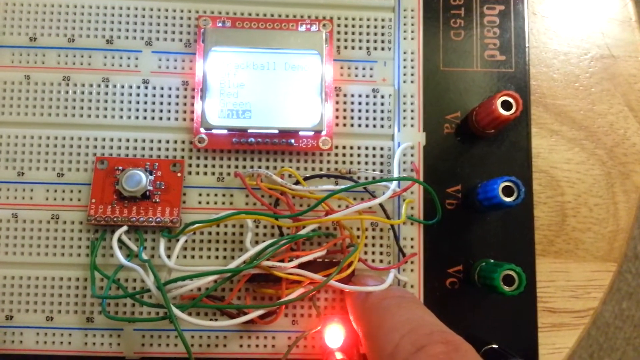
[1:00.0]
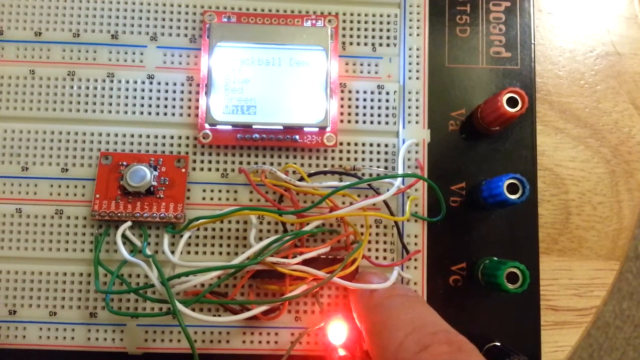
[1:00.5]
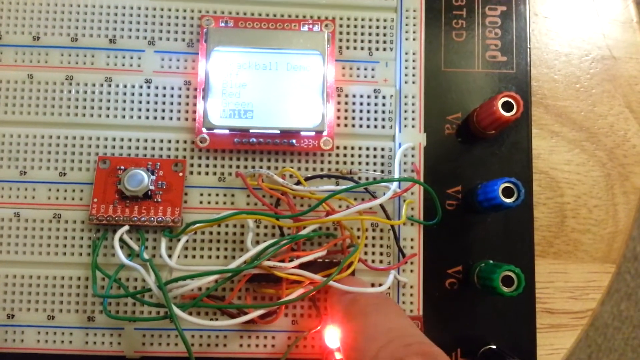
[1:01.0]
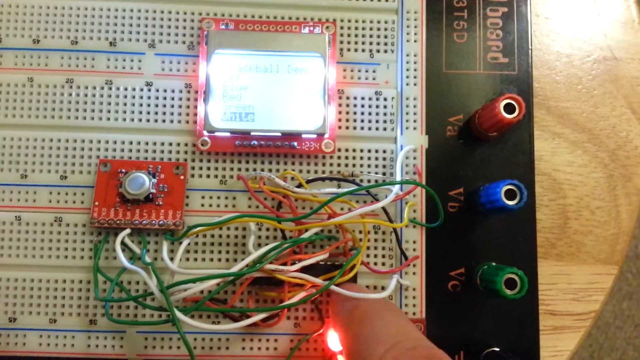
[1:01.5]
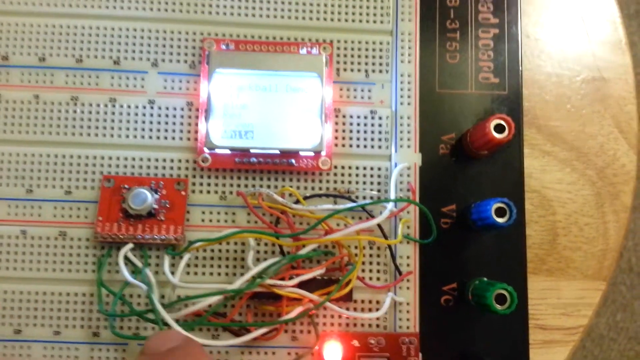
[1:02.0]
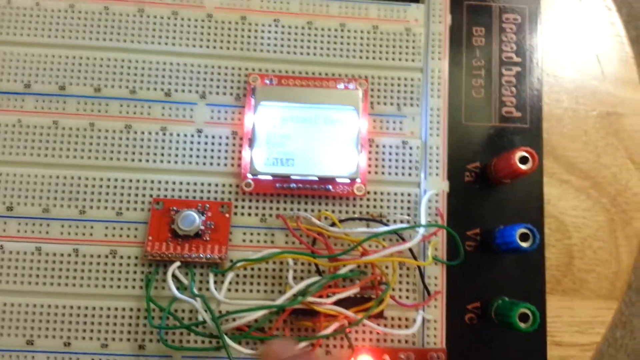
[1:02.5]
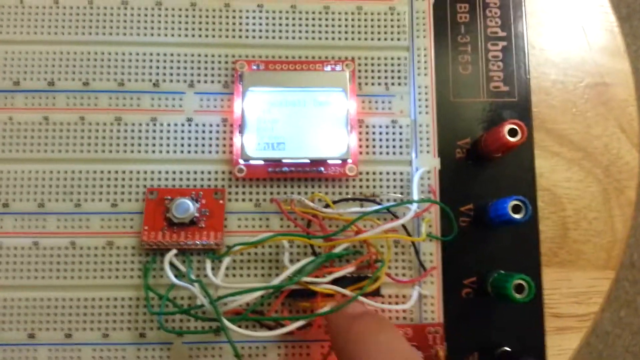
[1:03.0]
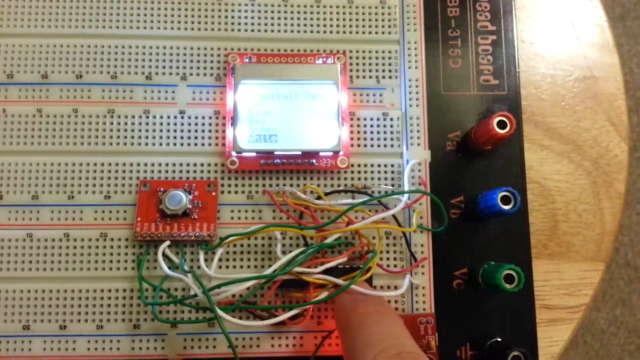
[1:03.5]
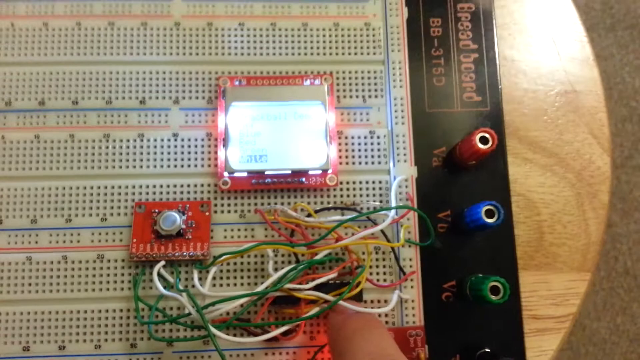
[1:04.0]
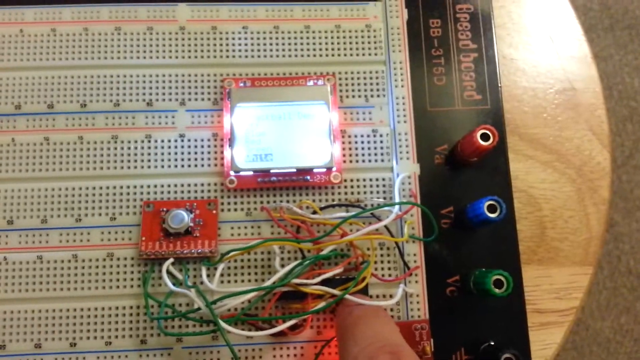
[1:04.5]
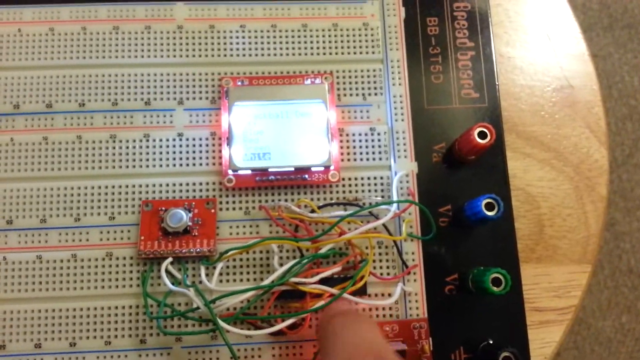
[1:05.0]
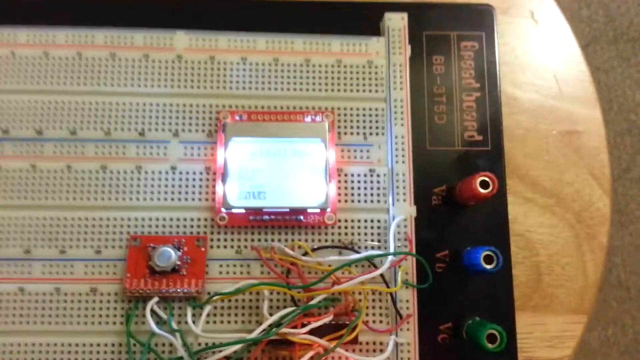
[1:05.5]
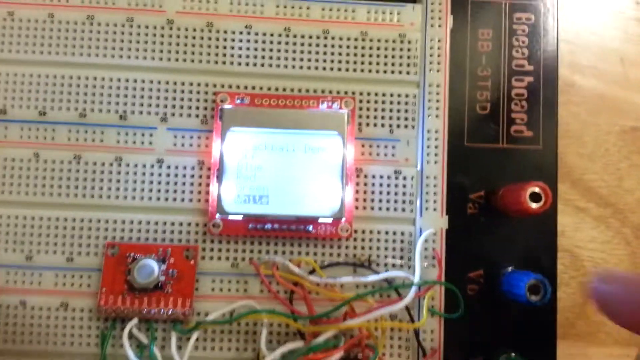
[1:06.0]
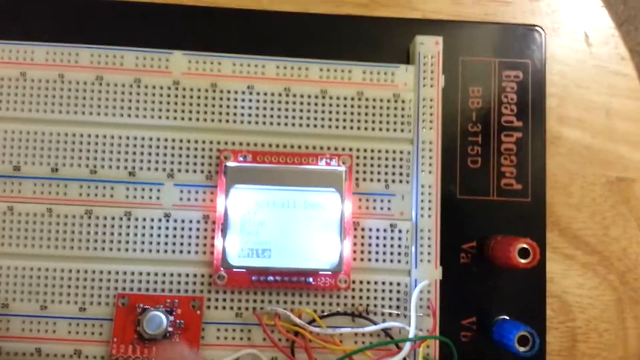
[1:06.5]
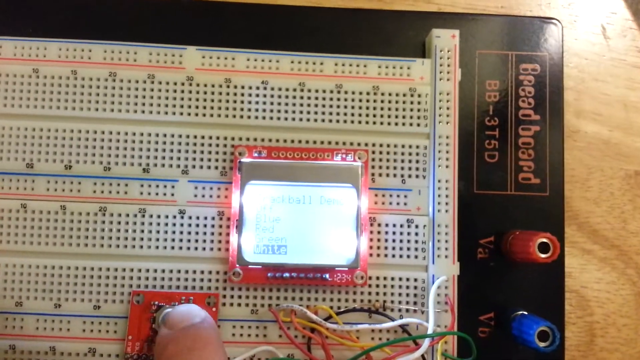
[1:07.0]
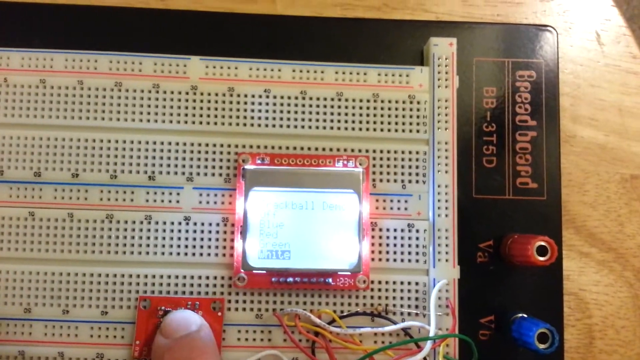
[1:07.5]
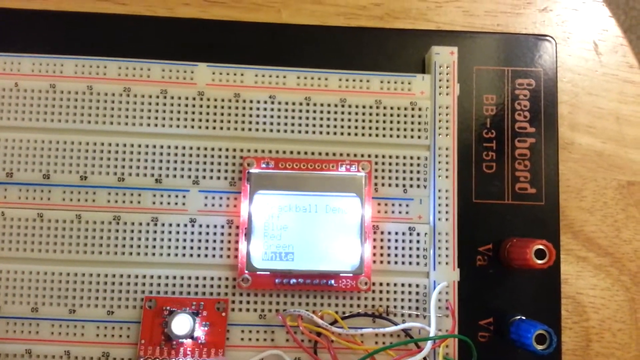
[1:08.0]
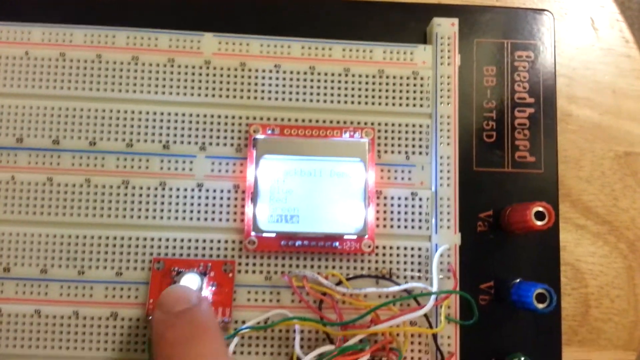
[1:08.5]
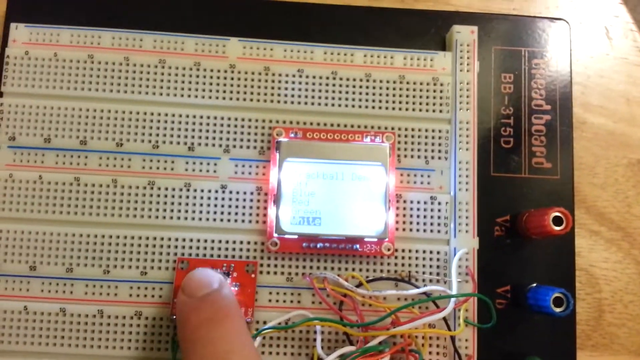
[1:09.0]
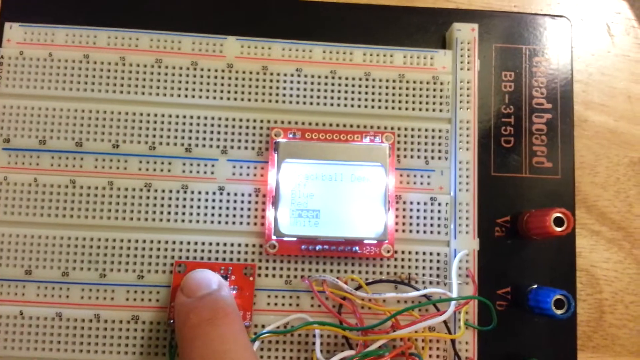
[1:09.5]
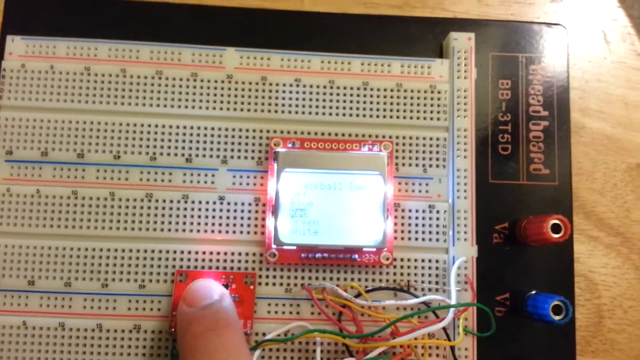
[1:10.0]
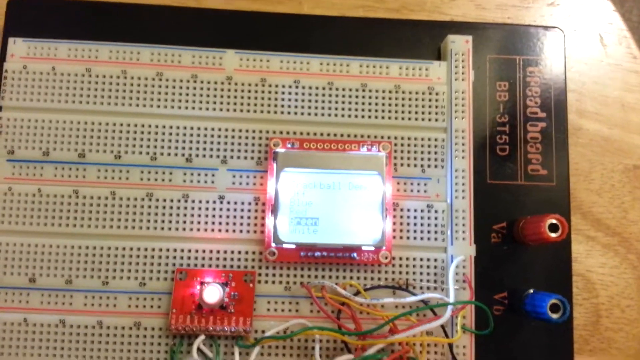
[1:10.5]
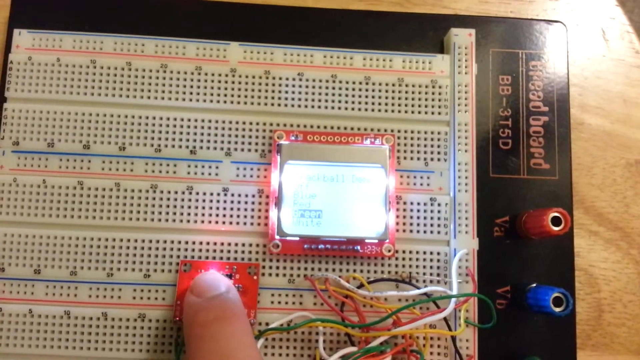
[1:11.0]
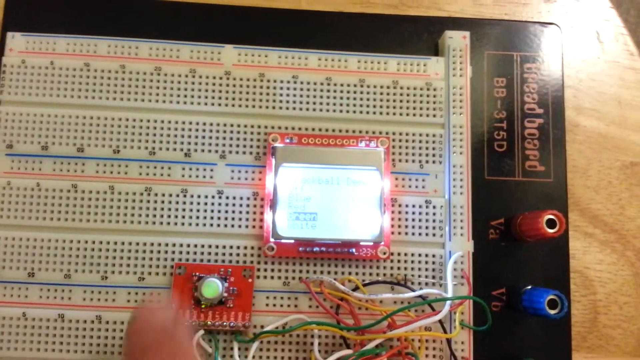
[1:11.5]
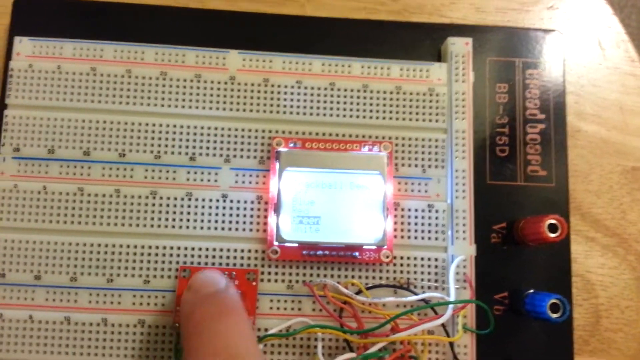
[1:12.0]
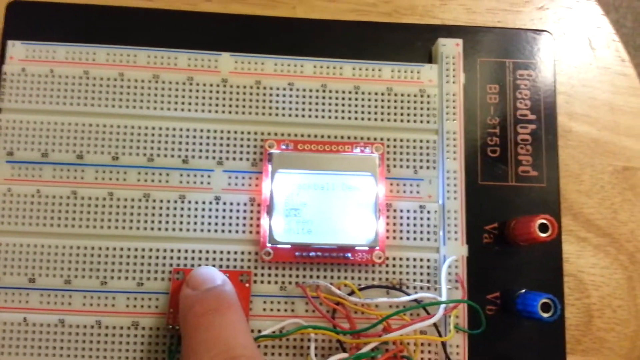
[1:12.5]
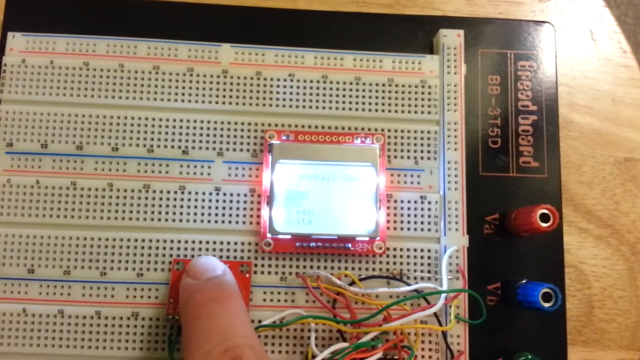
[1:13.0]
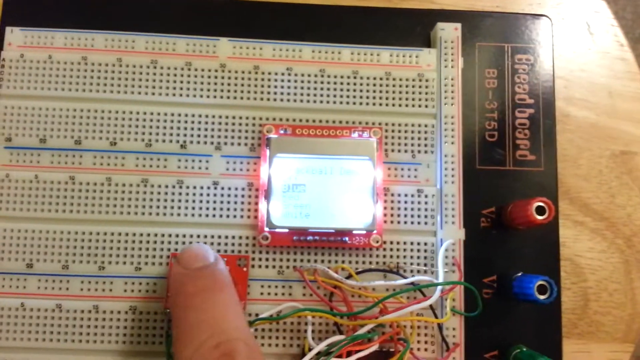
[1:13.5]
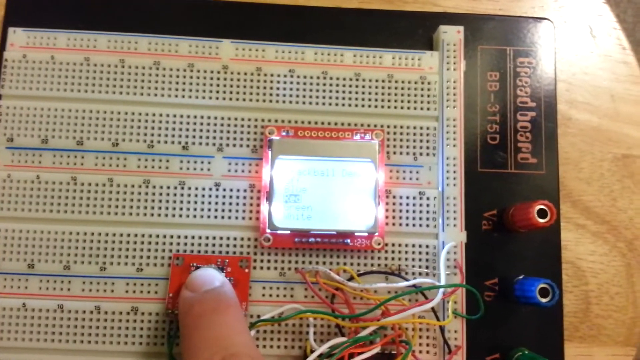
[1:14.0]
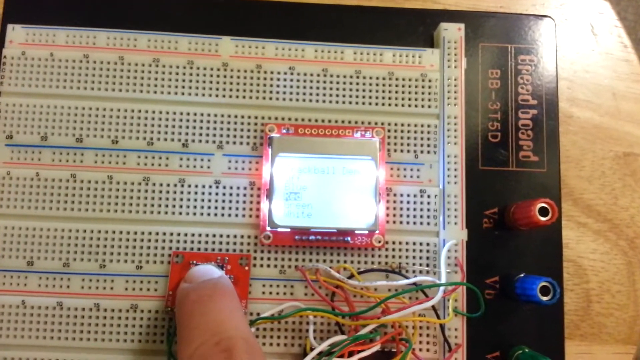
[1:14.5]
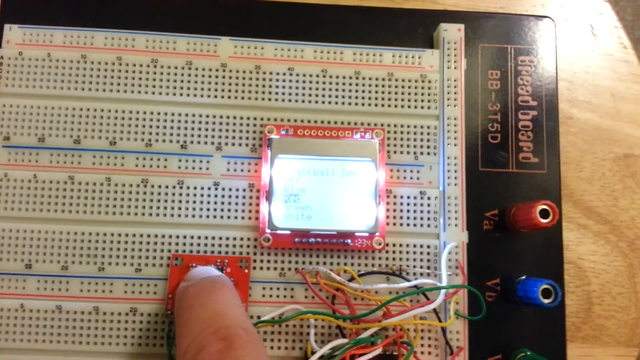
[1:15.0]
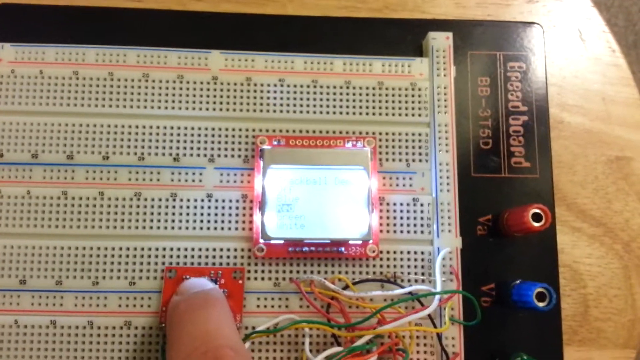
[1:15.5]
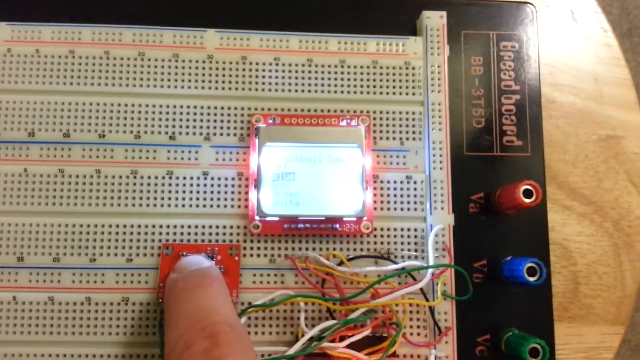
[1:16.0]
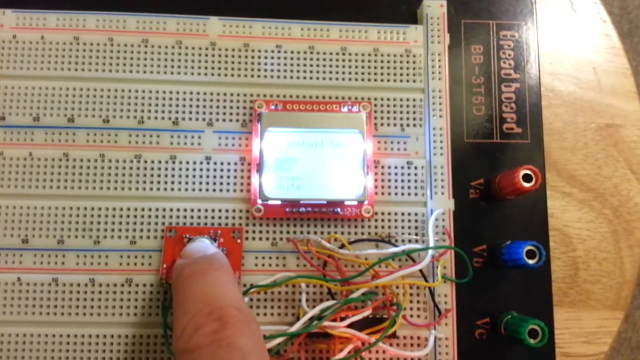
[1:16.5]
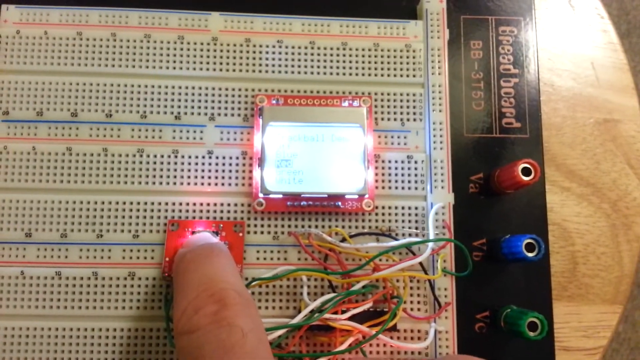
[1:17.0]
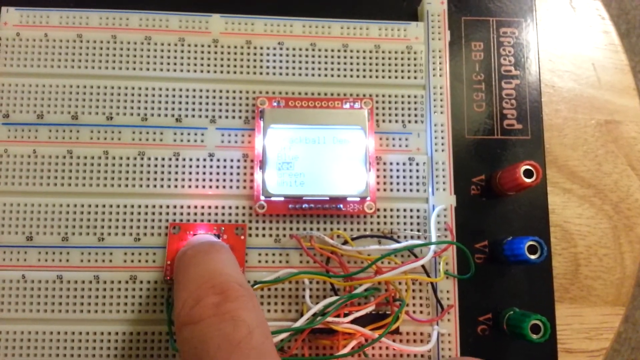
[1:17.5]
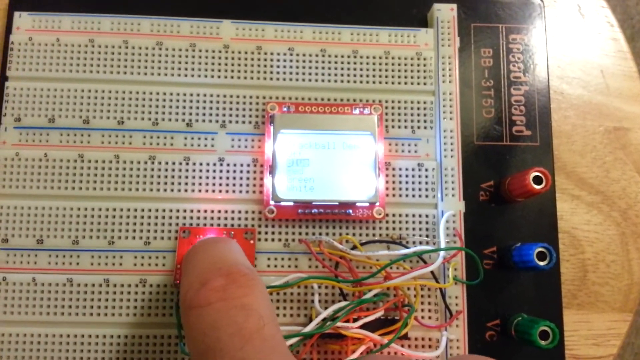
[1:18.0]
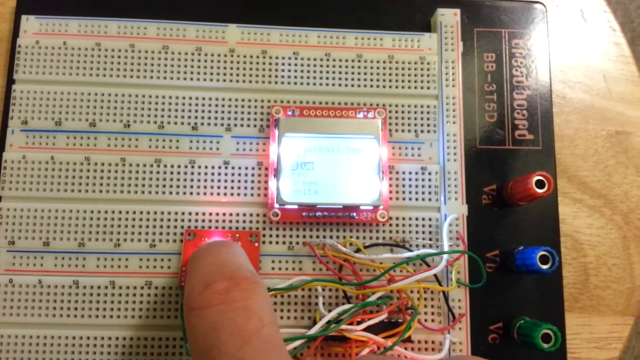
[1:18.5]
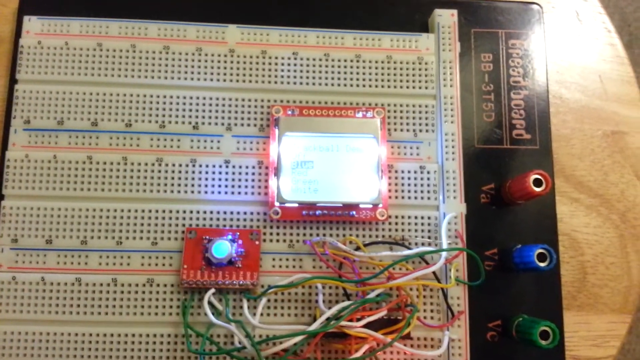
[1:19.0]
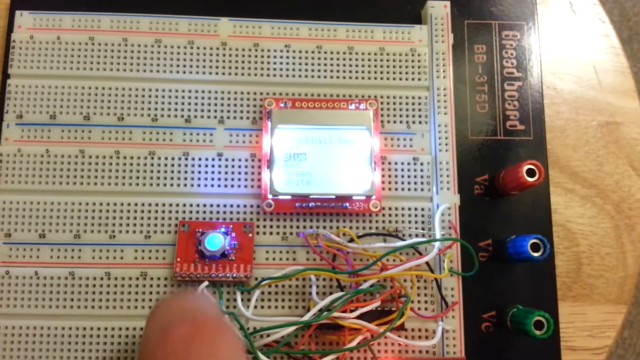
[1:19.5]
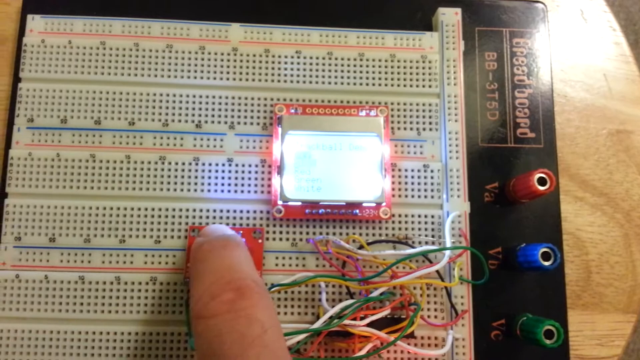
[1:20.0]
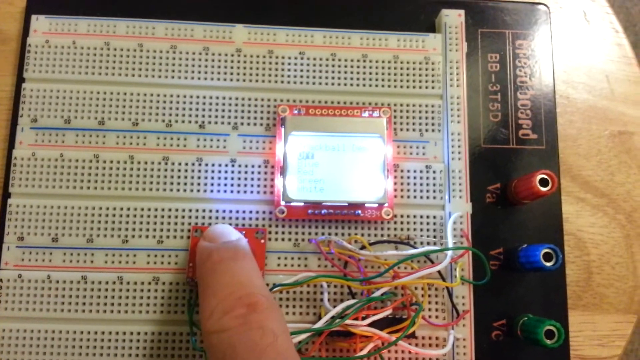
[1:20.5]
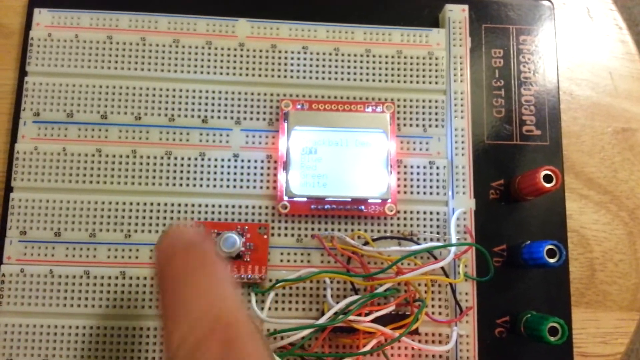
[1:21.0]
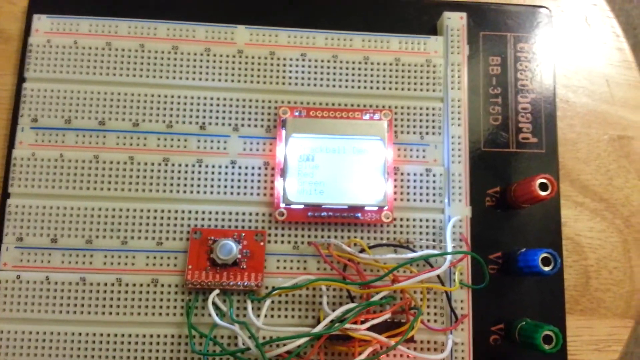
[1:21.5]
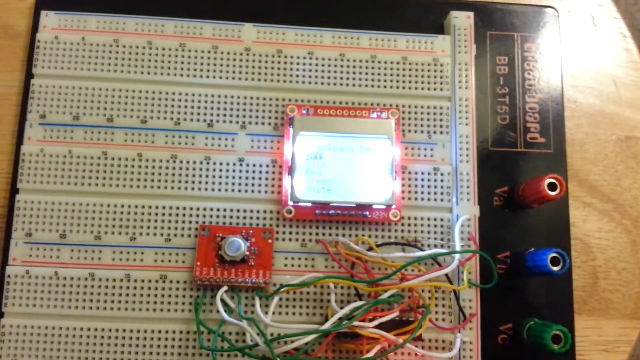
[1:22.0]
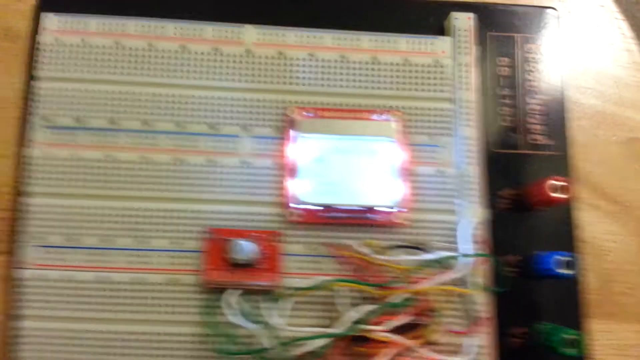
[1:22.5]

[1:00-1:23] The hand moves around a shape at the bottom and demonstrates other parts of the motherboard, pointing with the index finger near the wires and showing which wire goes where. It presses the button again, and the button changes color with the selected line: when blue is selected on the screen, the button turns blue, and eventually the button goes off. This is a breadboard test. On the side are slots coloured red, blue, green and black: red is labeled "VA", blue "VB" and green "VC", while black has no text under it and instead has a mark similar to a Wi-Fi icon. The breadboard is on top of a desk, and the board has numbers all around its lines.